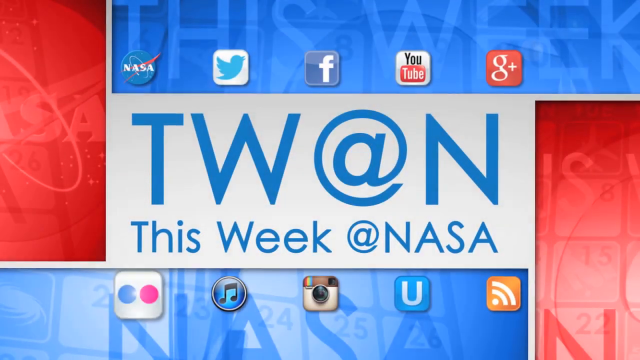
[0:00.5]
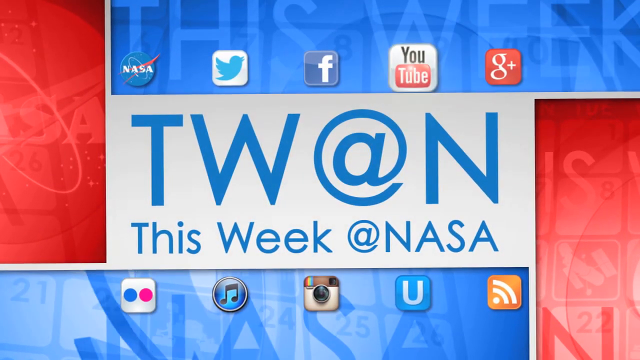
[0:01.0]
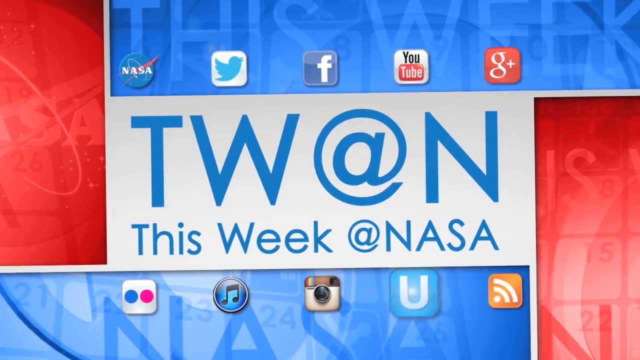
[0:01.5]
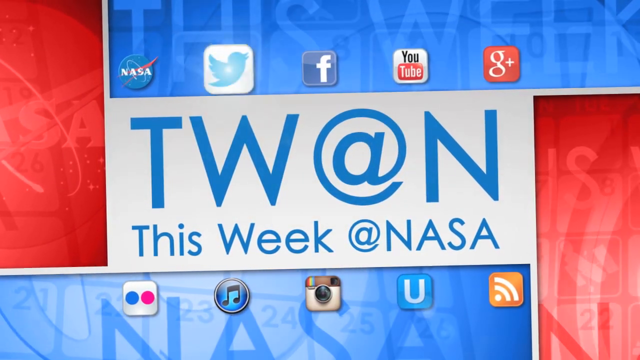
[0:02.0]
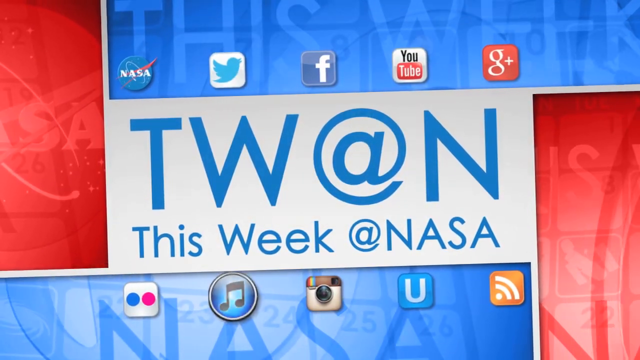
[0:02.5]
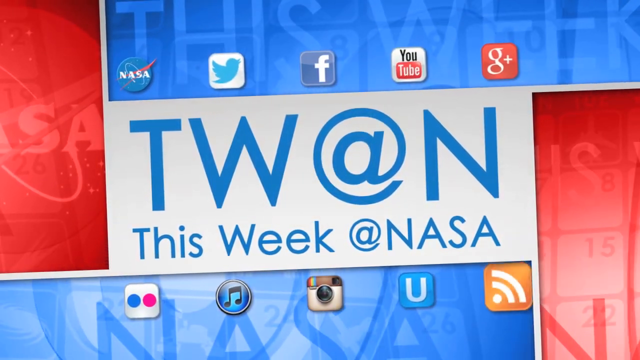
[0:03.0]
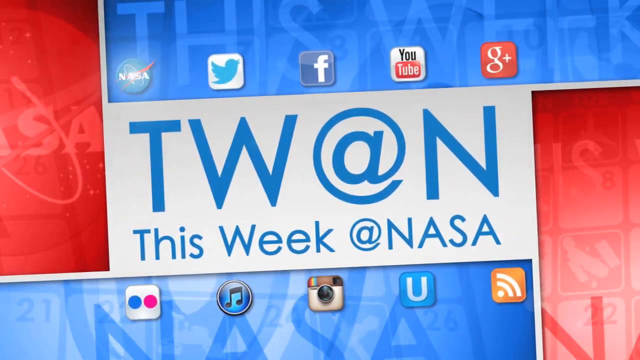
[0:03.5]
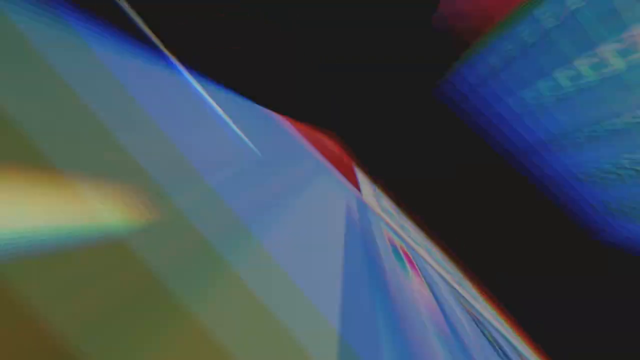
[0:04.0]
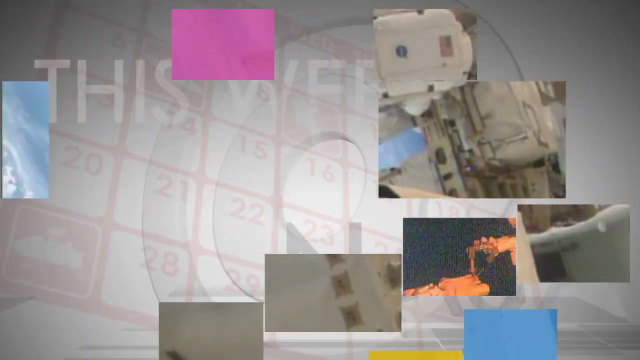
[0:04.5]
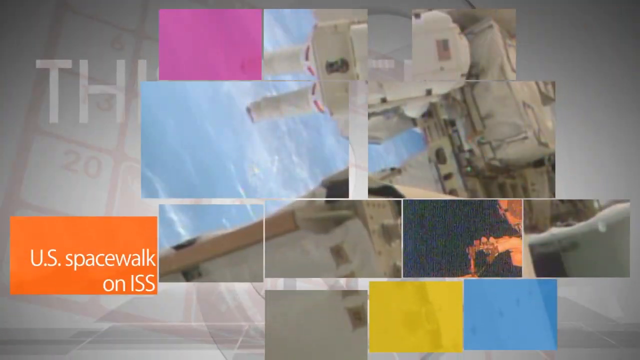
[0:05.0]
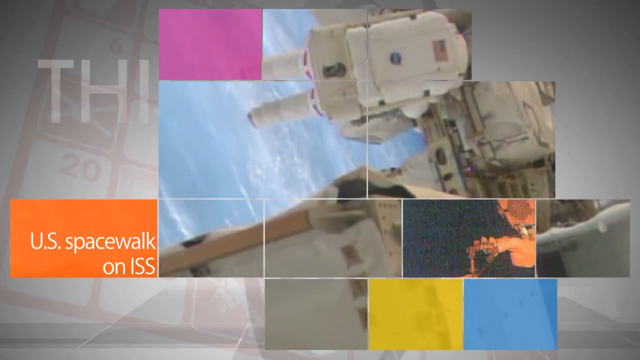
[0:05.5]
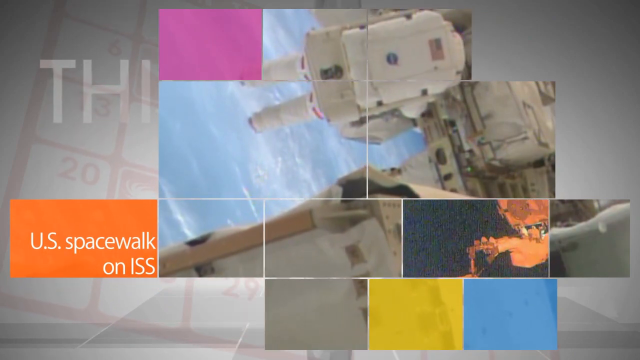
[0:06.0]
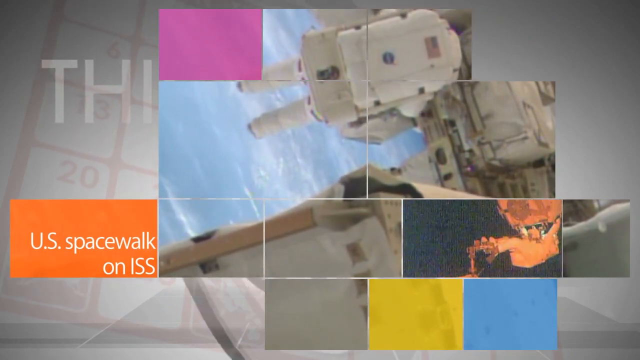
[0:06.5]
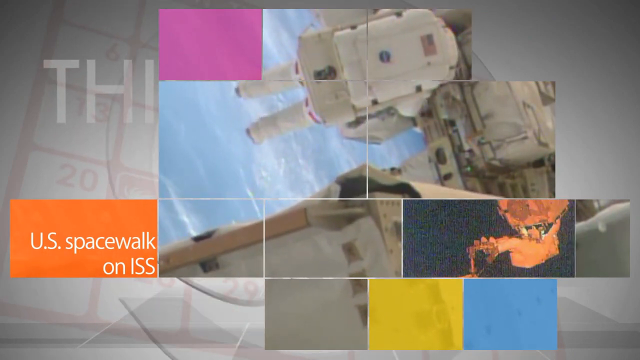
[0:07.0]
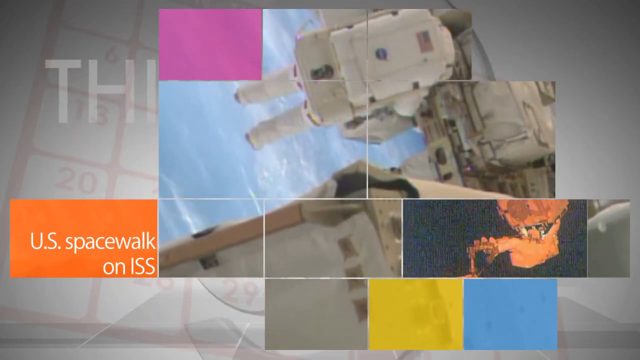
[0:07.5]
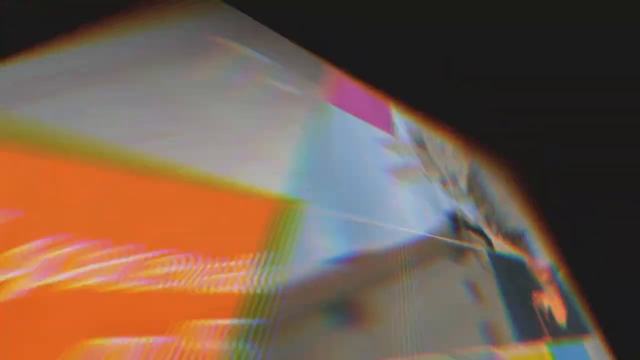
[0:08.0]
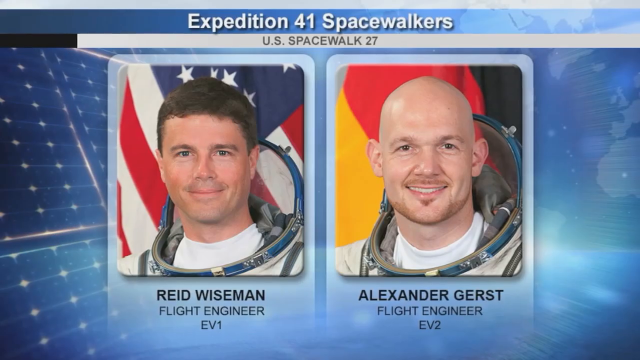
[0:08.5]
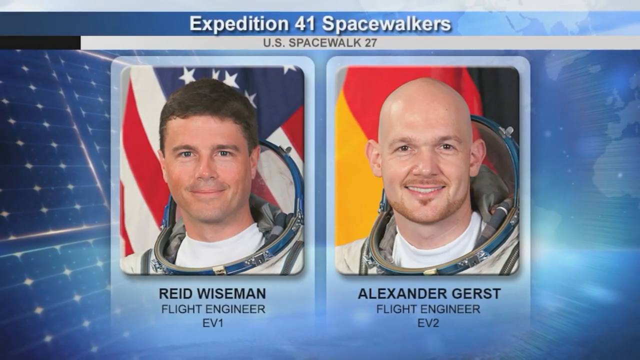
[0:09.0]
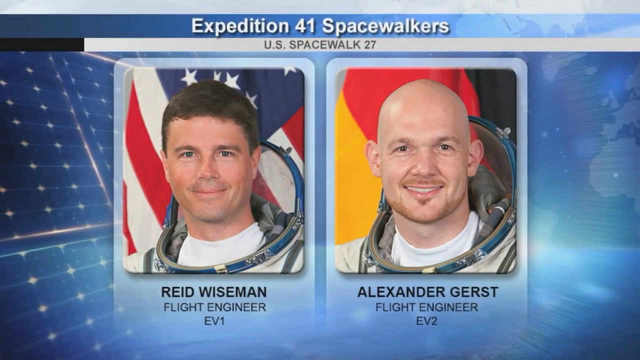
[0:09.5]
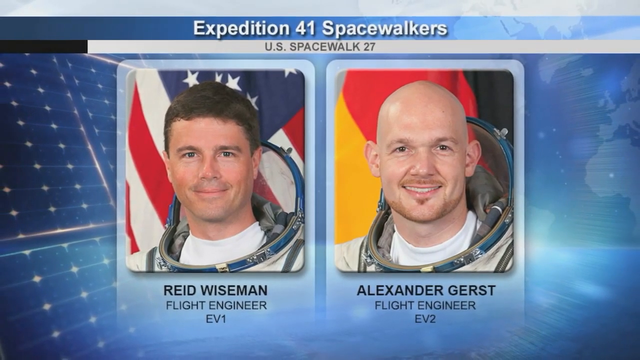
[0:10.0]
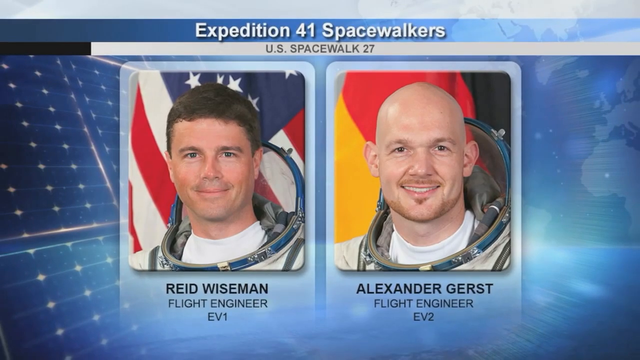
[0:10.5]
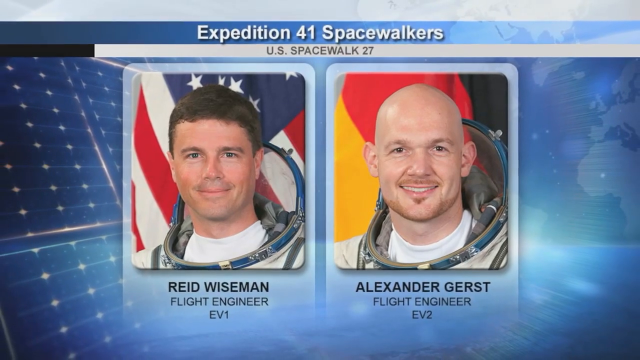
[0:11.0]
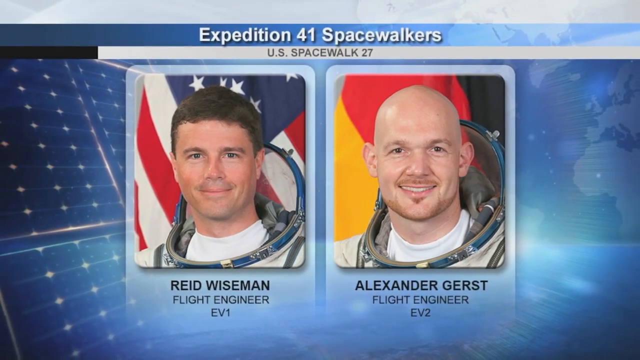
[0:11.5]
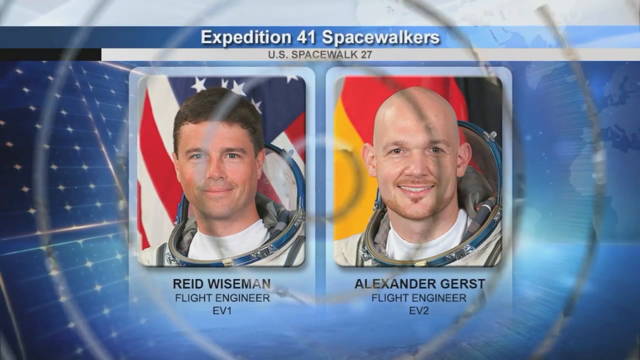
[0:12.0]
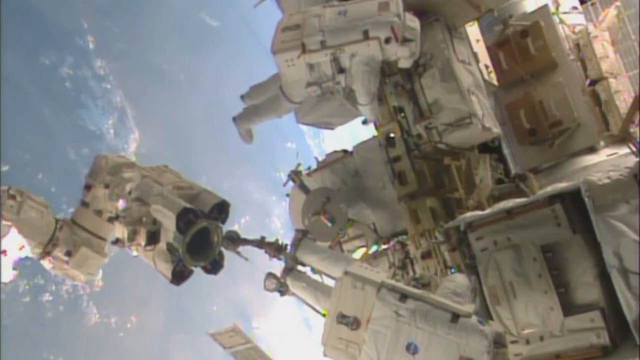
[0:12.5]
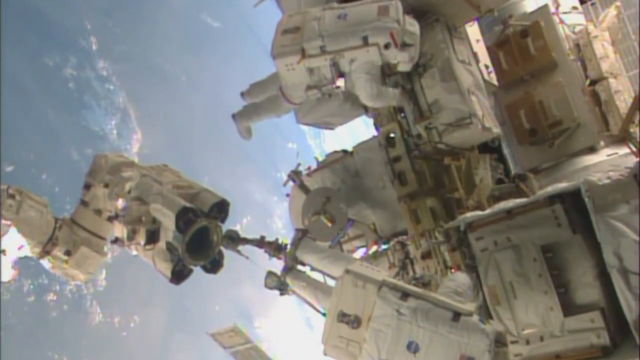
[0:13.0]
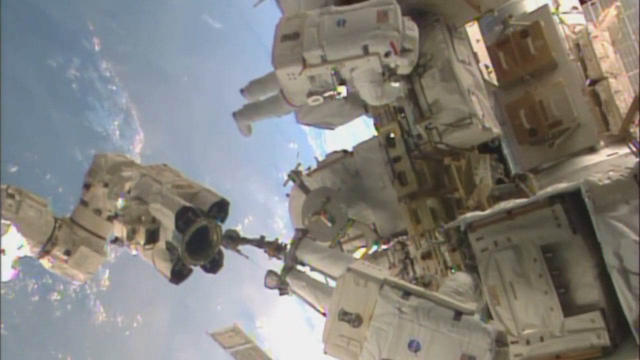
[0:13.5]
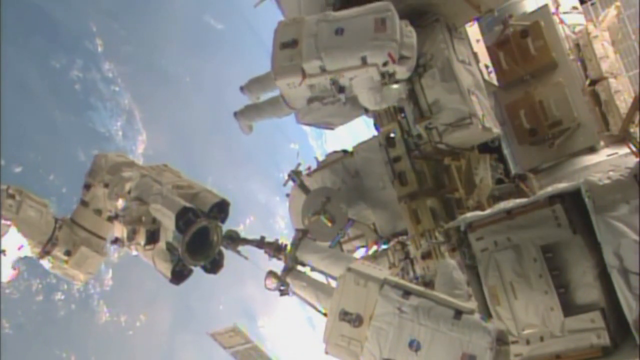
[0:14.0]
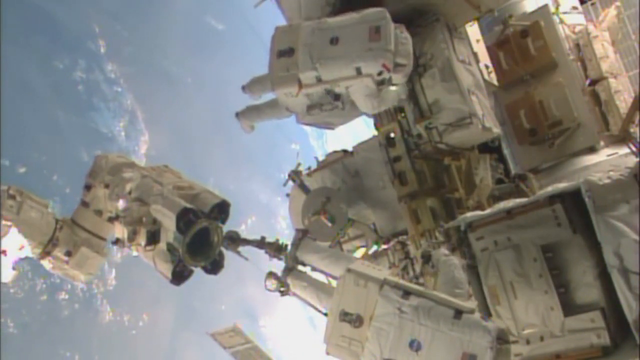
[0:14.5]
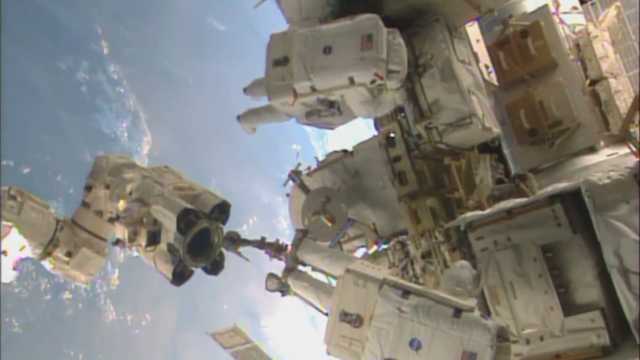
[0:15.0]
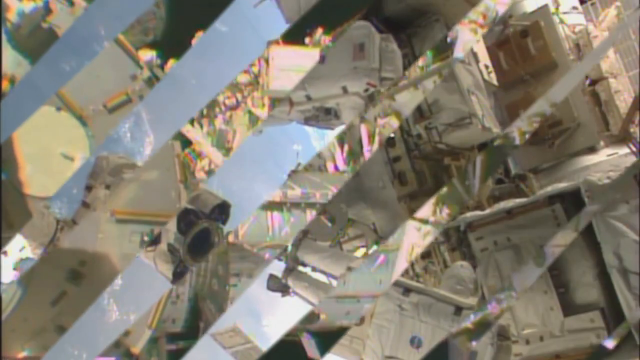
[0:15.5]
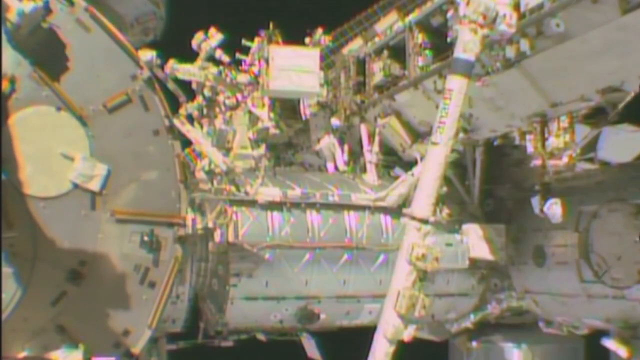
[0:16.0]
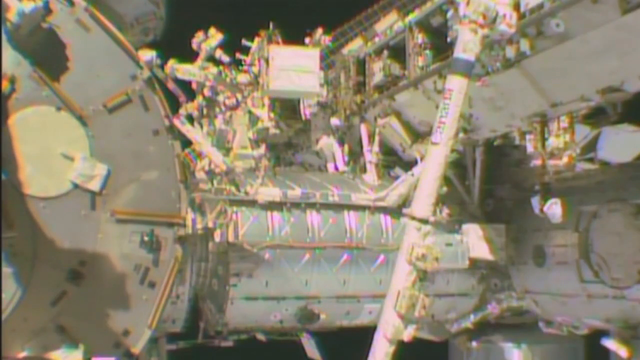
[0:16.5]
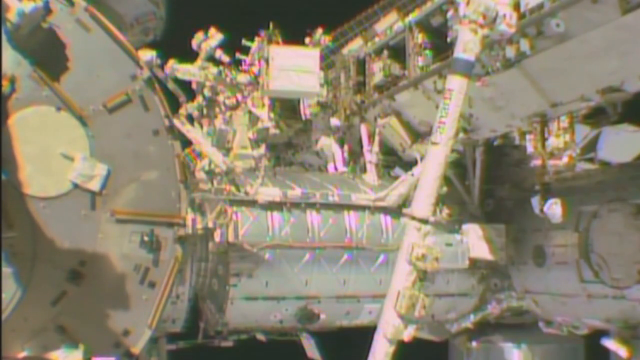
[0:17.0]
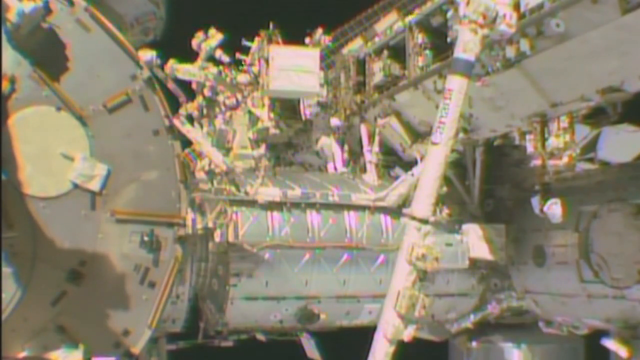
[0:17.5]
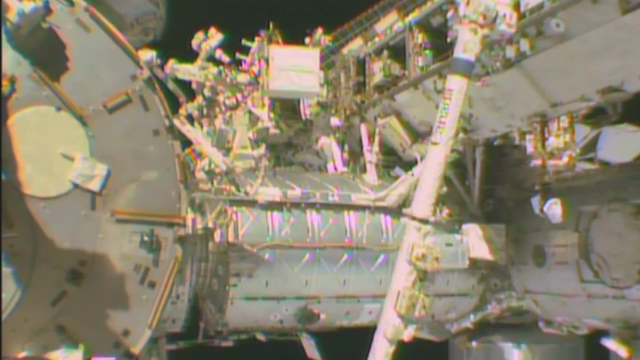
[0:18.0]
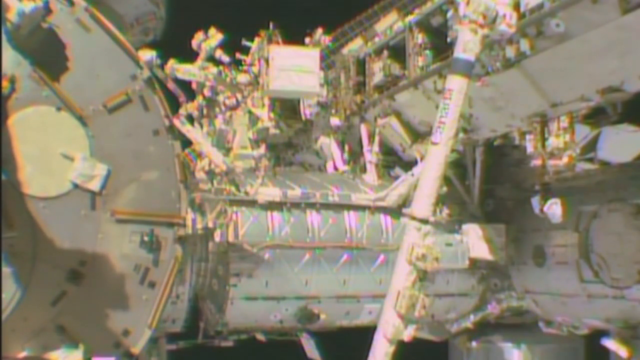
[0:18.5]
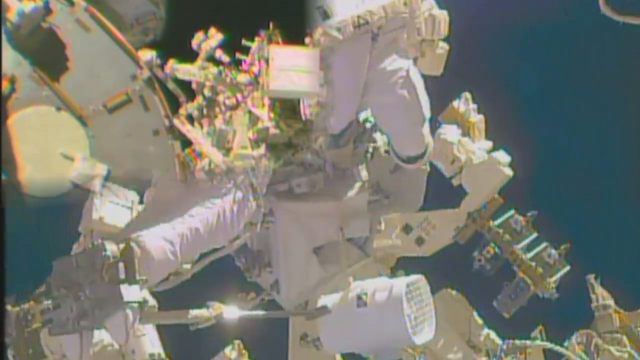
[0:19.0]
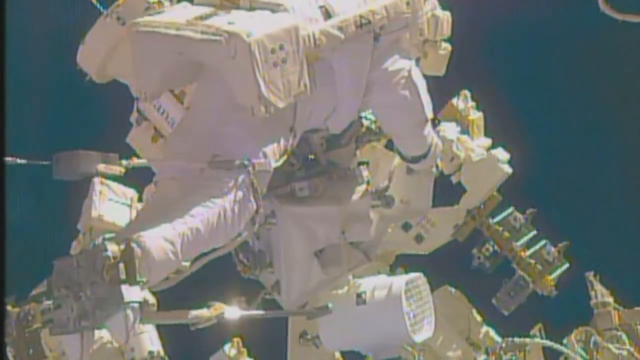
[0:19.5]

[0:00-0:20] The video opens on a computer or TV screen image showing "TW at N" and "this week at NASA", TWAN being the abbreviation for This Week at NASA. A block design of red and blue rectangles surrounds the TWAN symbol, with small app icons around it: the NASA app, Twitter, Facebook, YouTube, Google Plus, an unidentified icon with a blue and a pink circle, a music icon, Instagram, a U, and something like a Wi-Fi icon. The icons seem to light up. The screen then flips to a page reading "US spacewalk on ISS", "Expedition 41 spacewalkers" and "US spacewalk 27", showing pictures of two astronauts: "Reid Weissman, flight engineer, EV1" and "Alexander Gerst, flight engineer, EV2". Reid Weissman has an American flag behind him, and Alexander Gerst appears to have a German flag behind him, though it is hard to tell.